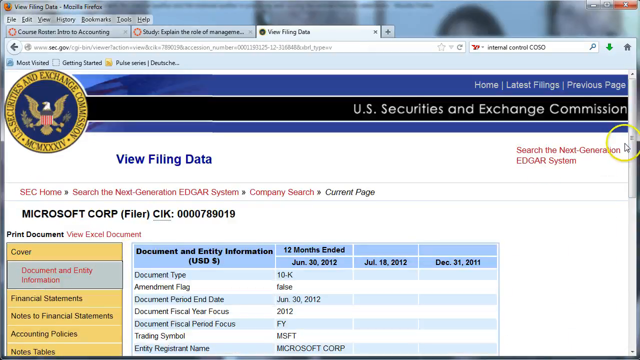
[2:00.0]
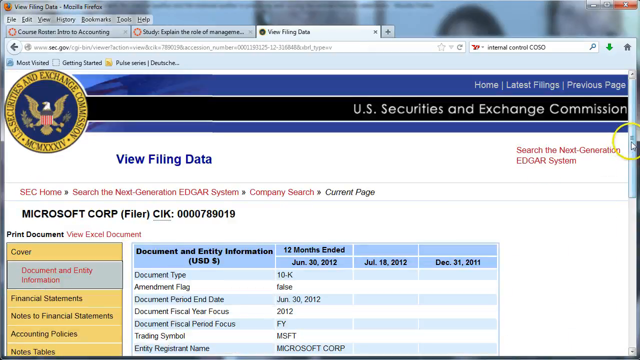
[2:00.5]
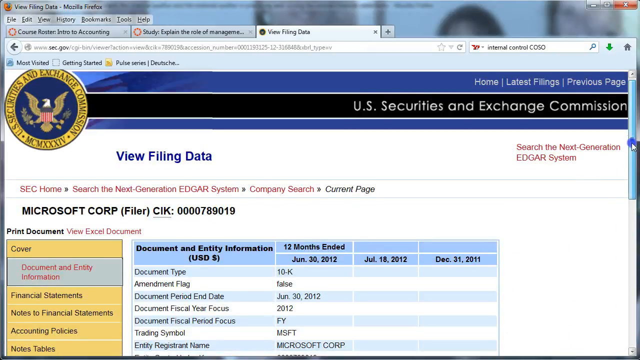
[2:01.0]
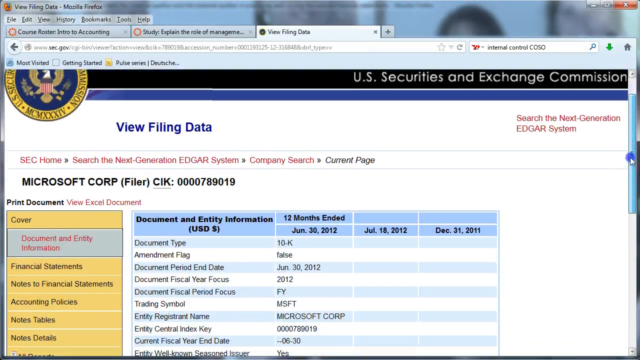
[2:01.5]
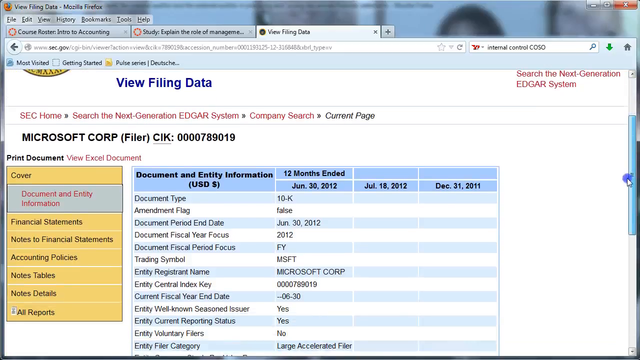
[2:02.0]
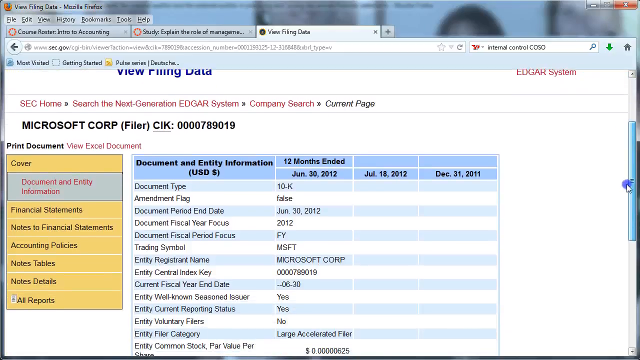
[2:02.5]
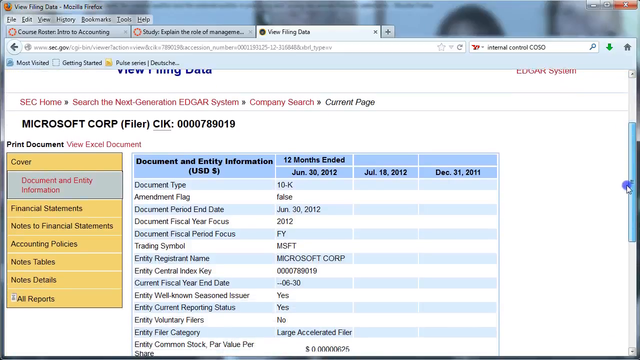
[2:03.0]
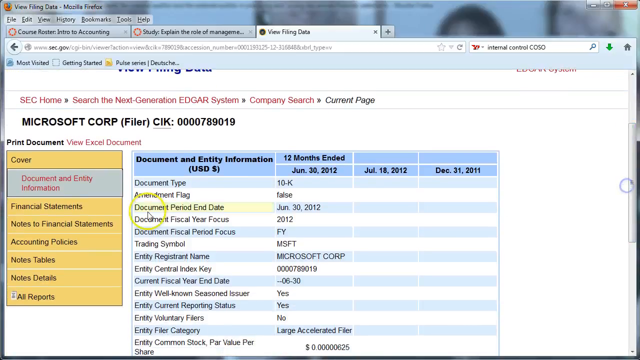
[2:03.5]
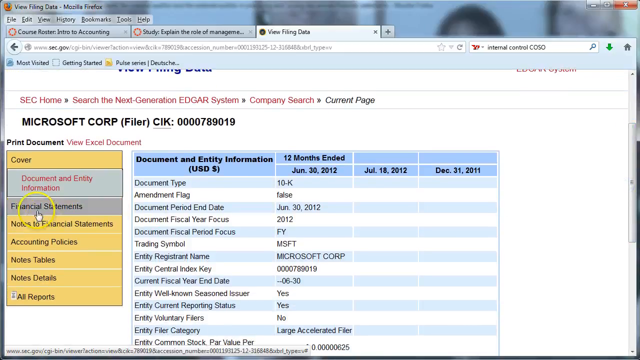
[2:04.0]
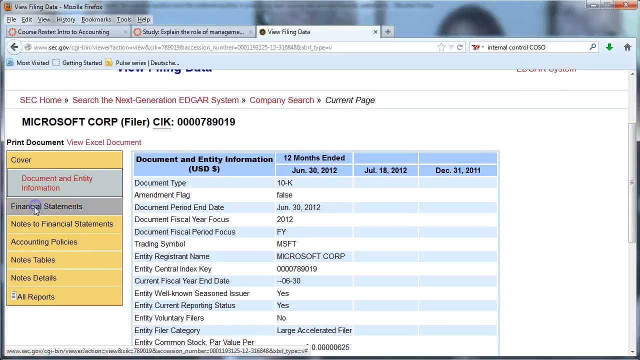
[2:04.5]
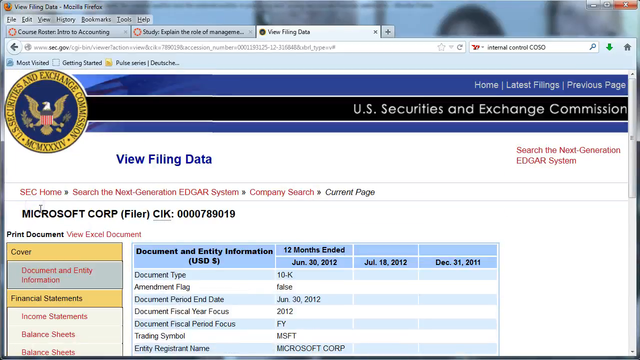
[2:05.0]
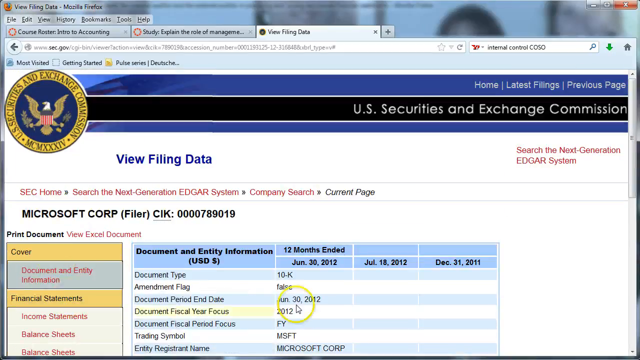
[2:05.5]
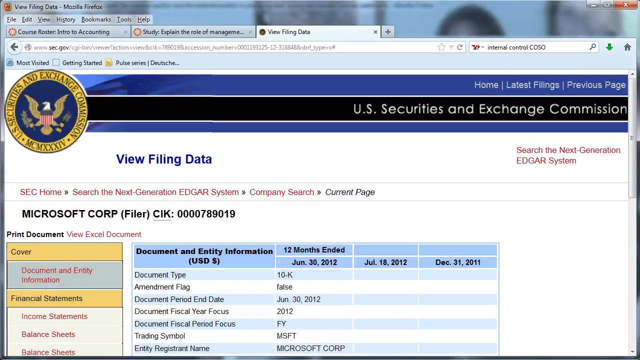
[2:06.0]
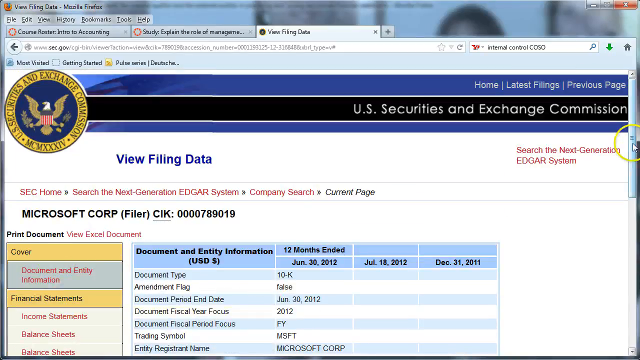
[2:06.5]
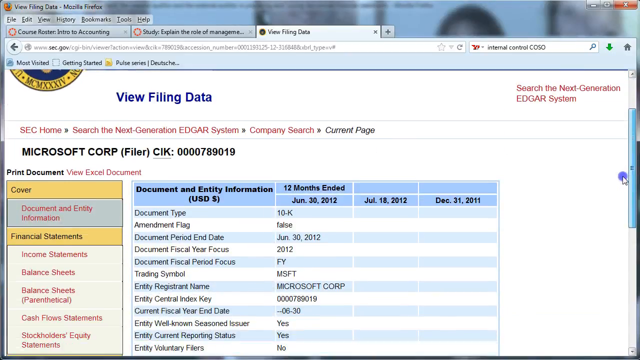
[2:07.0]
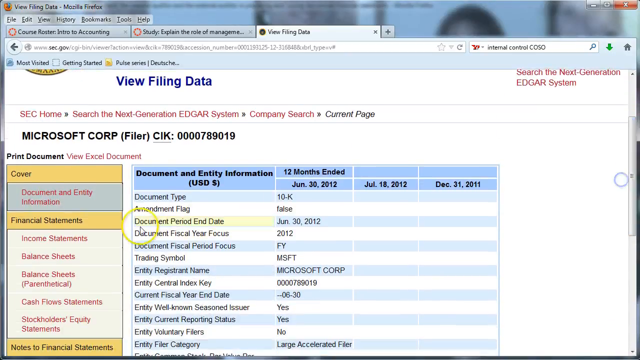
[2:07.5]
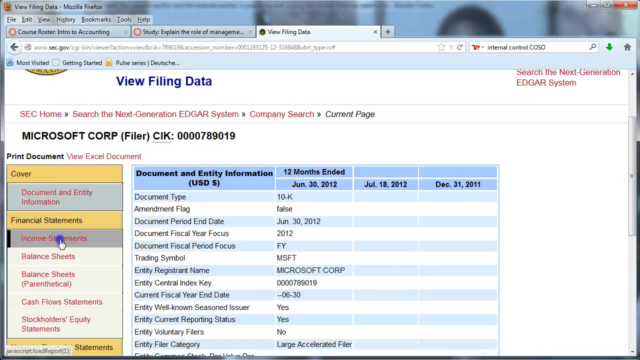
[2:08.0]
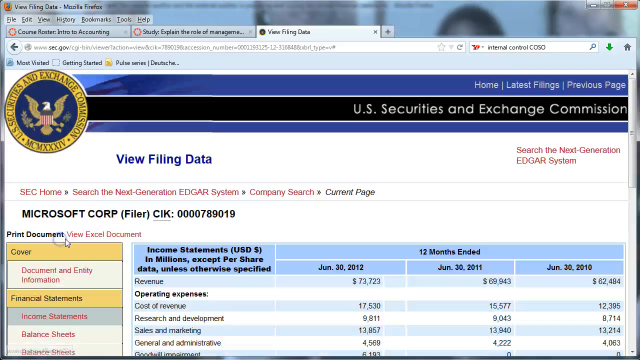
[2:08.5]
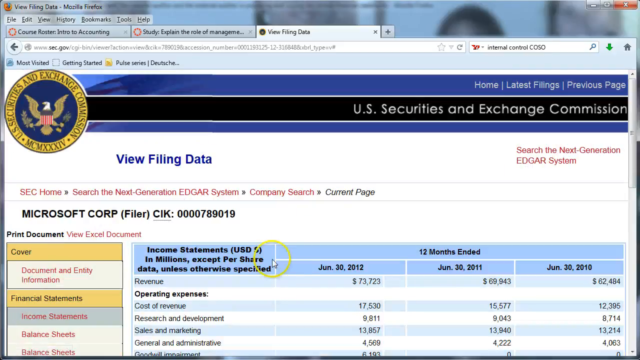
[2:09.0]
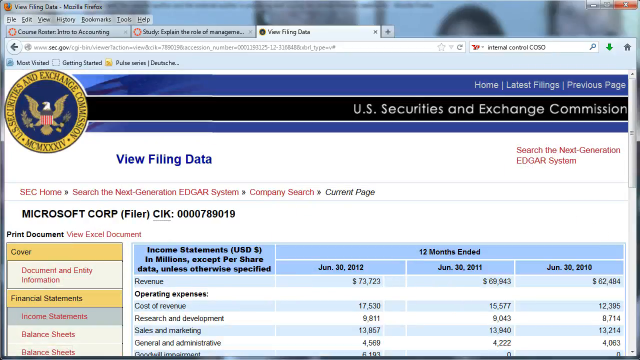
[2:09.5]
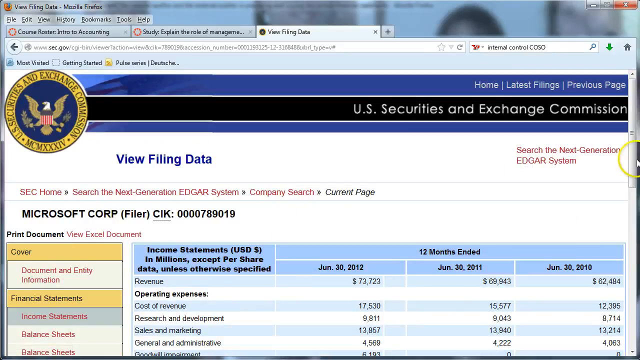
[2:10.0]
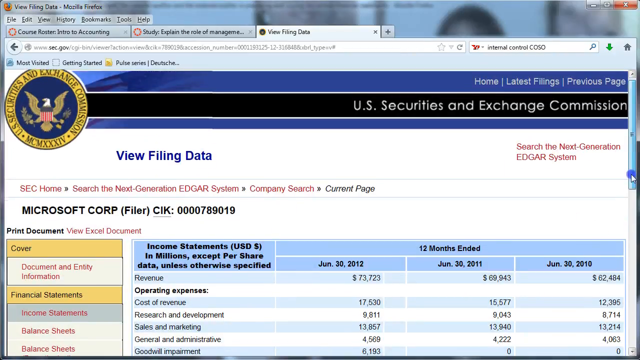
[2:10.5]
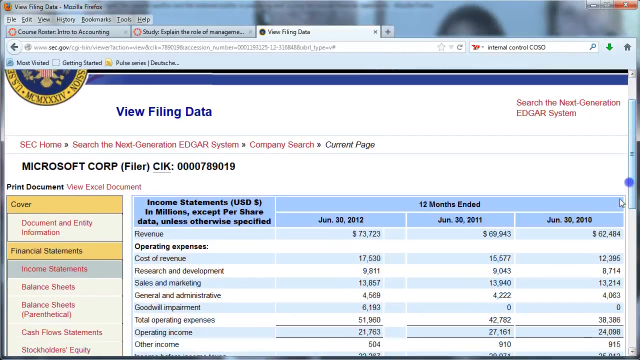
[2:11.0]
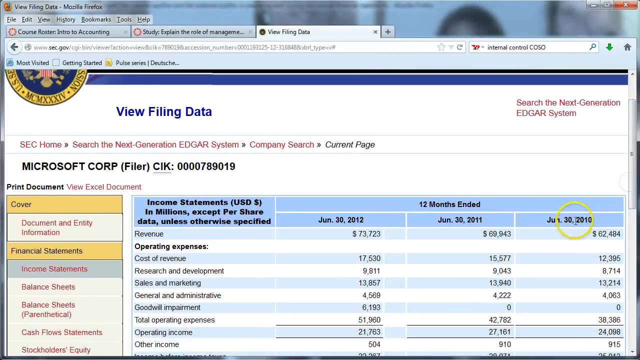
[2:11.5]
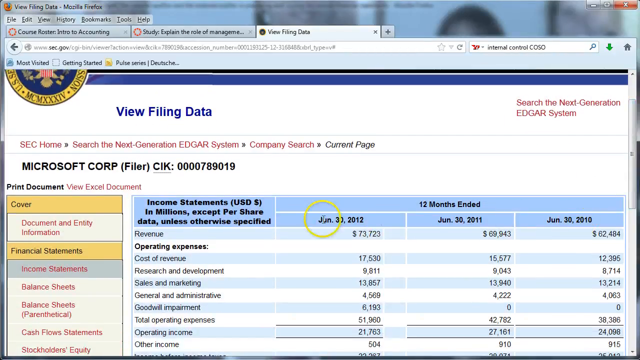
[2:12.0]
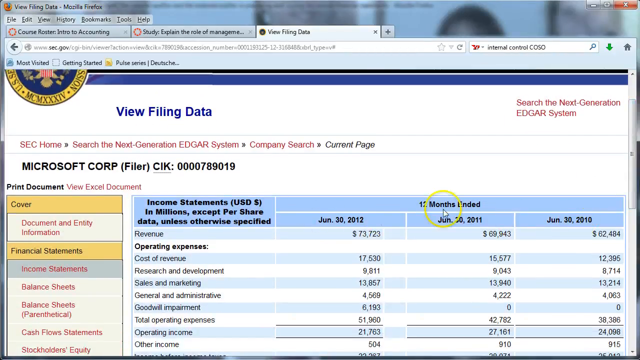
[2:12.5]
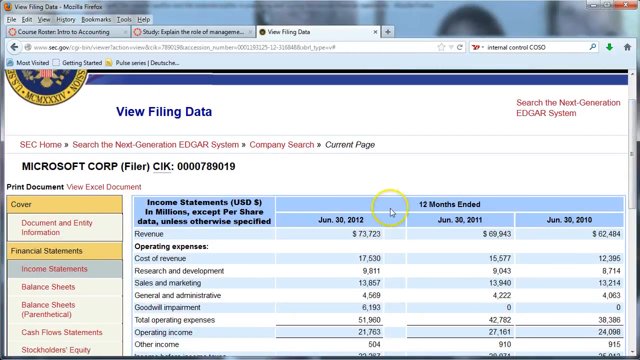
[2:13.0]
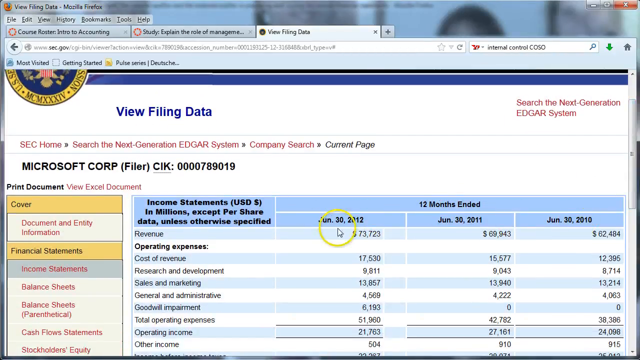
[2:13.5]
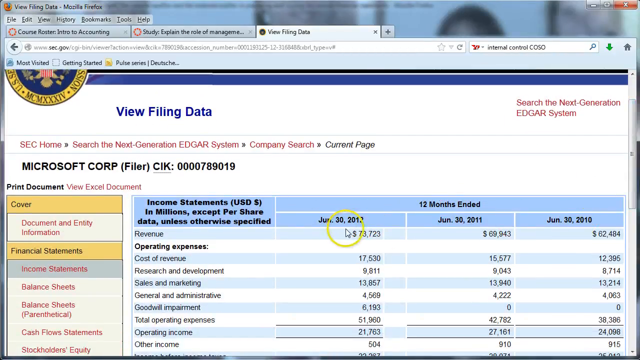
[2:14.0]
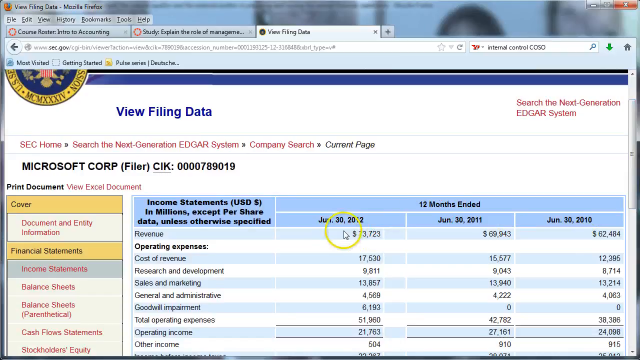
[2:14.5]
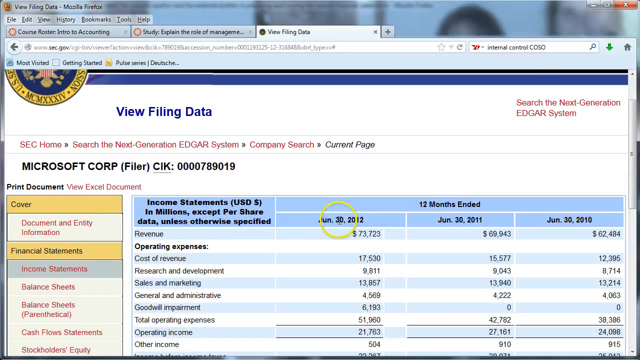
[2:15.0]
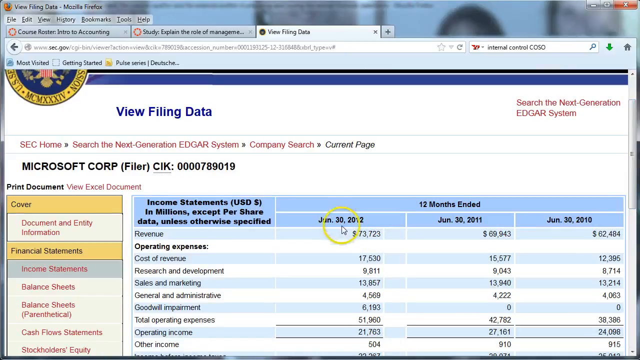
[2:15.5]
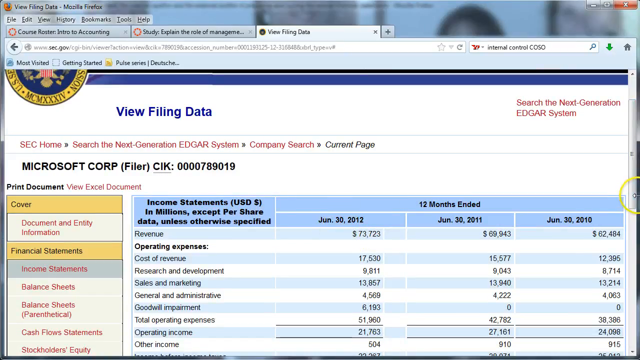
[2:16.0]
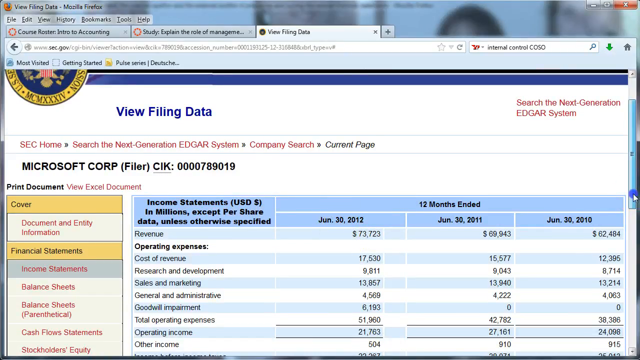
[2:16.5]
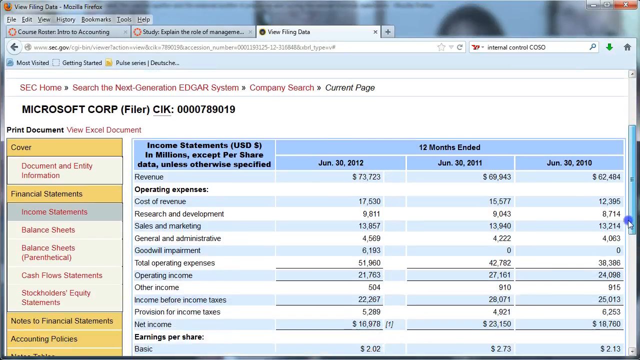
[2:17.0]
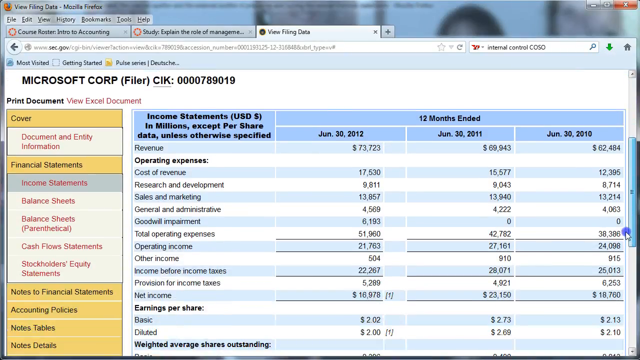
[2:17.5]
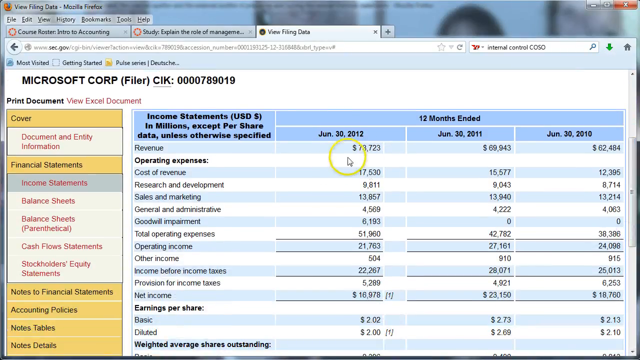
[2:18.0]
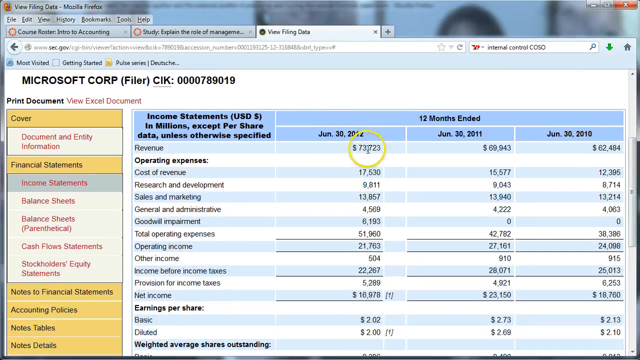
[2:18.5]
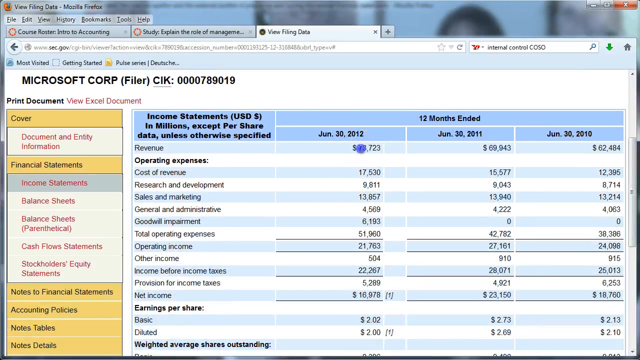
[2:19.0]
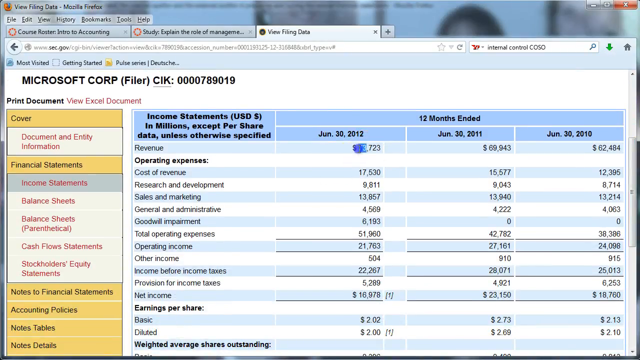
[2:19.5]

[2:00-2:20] On the Viewing Filing Data page, the user scrolls, revealing the period December 31st, 2011 to June 30th, 2012. On the left-hand side they highlight and click Financial Statements, which expands into several options: Income Statements first, then Balance Sheets, Cash Flow Statements and Stockholder Equity Statements. They click Income Statements and scroll down to the revenue for June 30th, 2012, shown as $73,723. The other statements are not clicked.